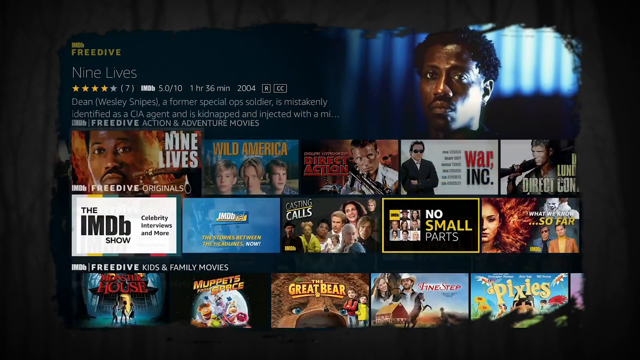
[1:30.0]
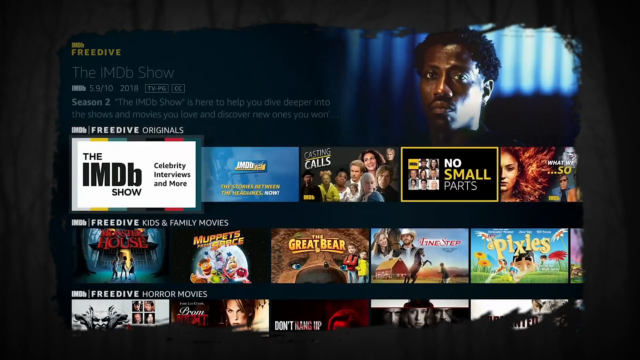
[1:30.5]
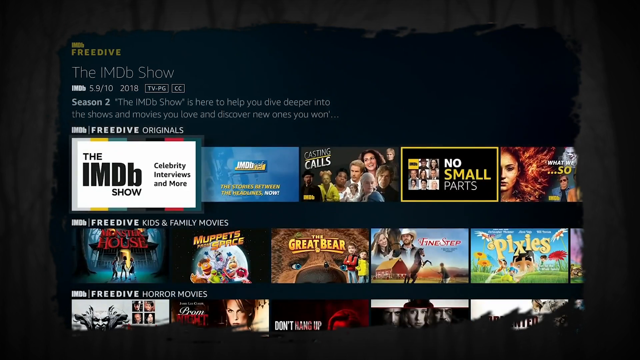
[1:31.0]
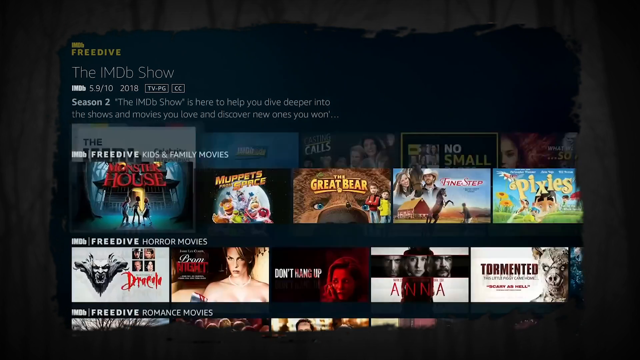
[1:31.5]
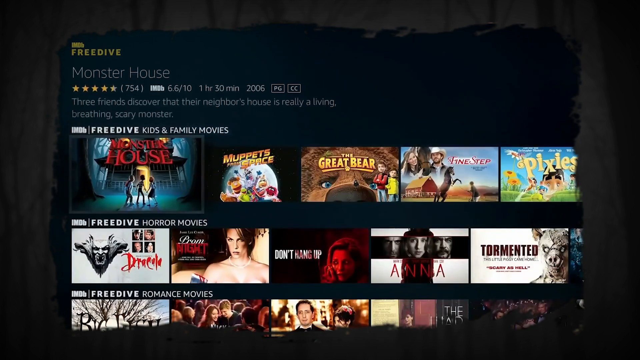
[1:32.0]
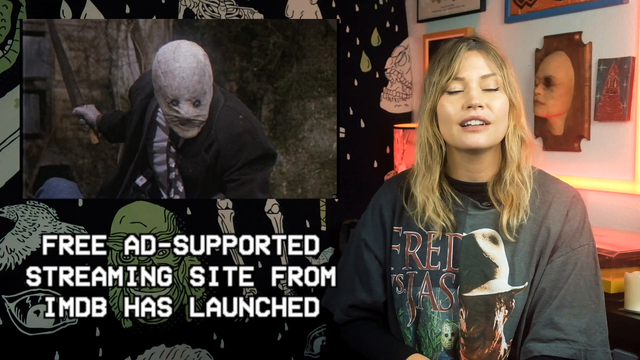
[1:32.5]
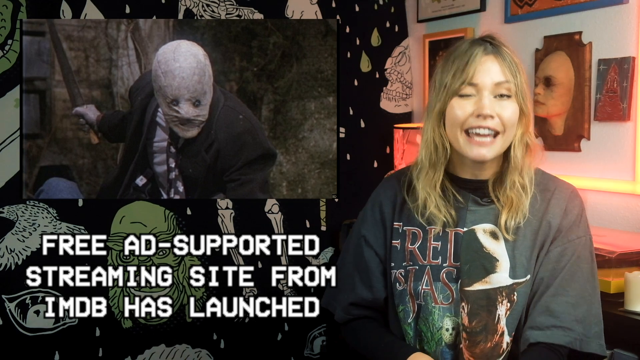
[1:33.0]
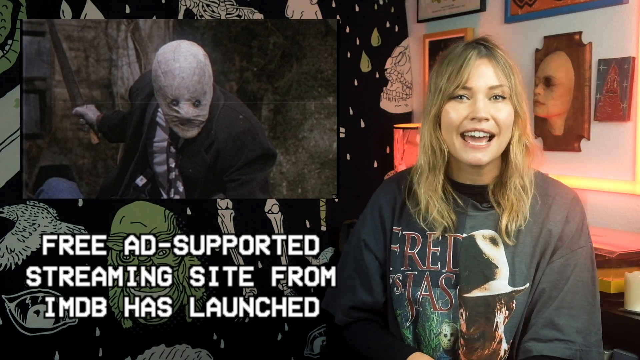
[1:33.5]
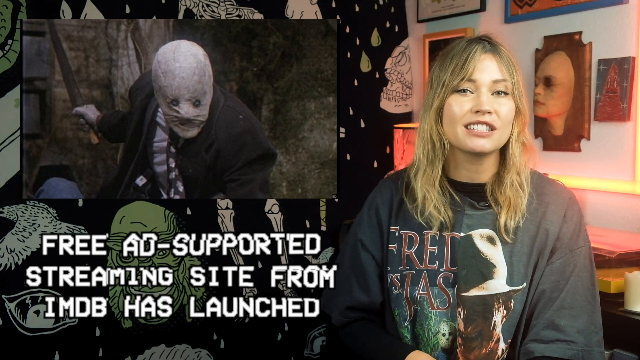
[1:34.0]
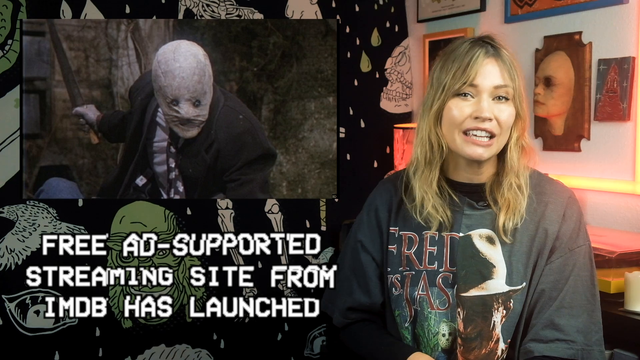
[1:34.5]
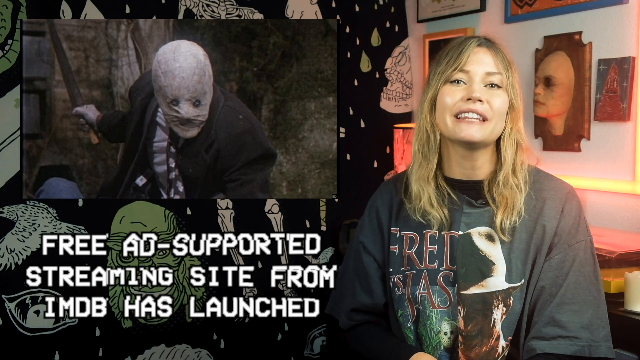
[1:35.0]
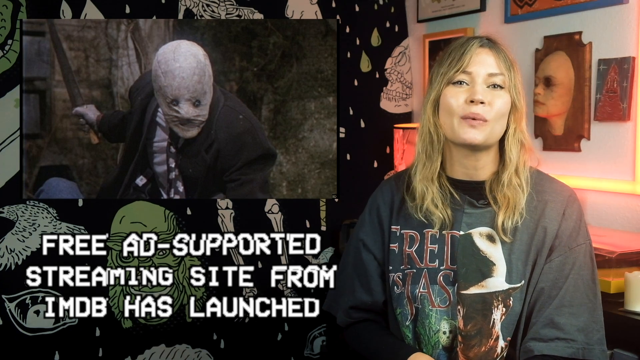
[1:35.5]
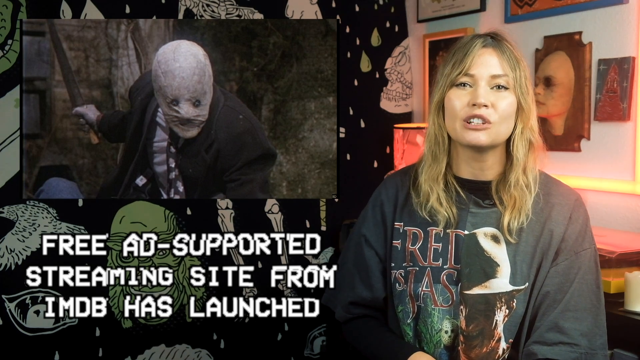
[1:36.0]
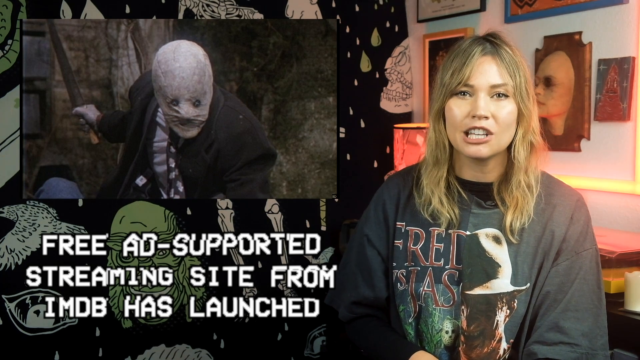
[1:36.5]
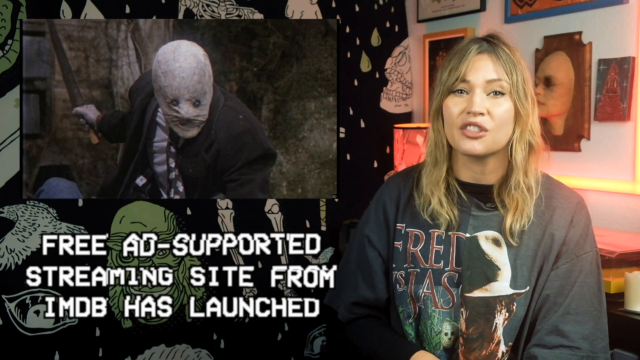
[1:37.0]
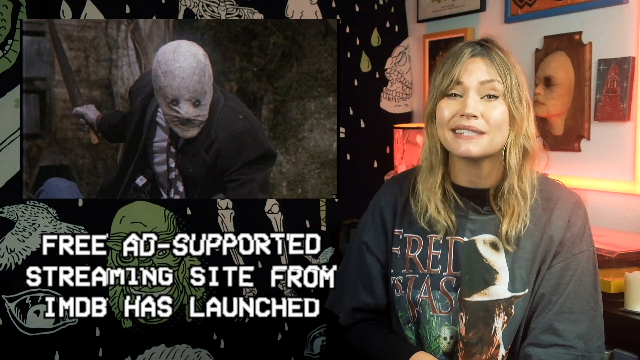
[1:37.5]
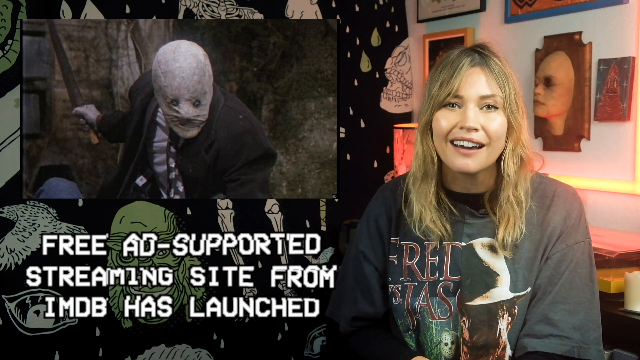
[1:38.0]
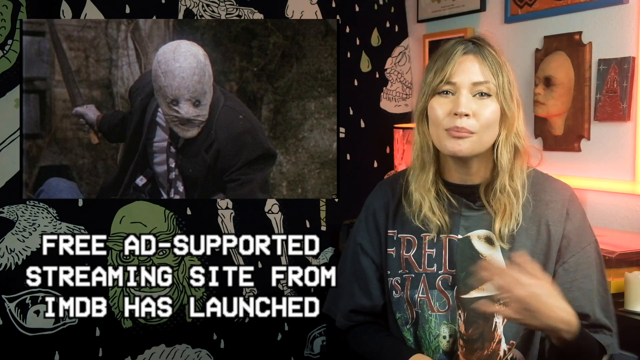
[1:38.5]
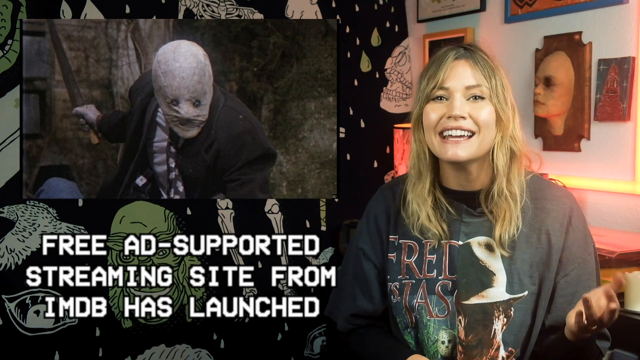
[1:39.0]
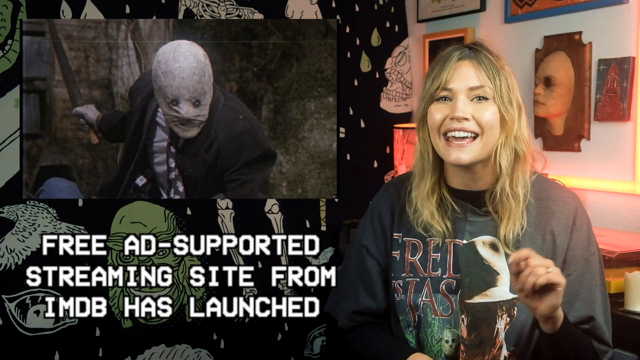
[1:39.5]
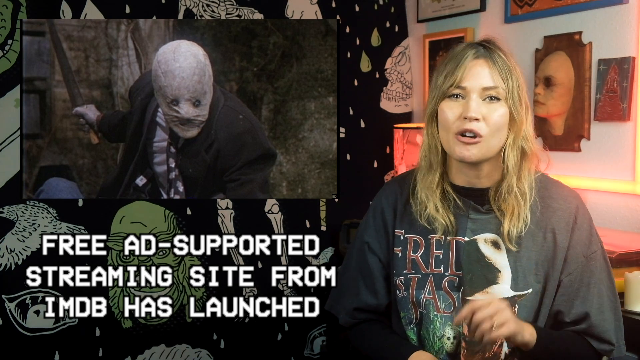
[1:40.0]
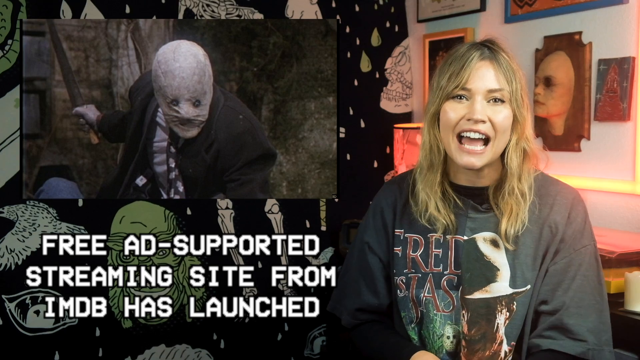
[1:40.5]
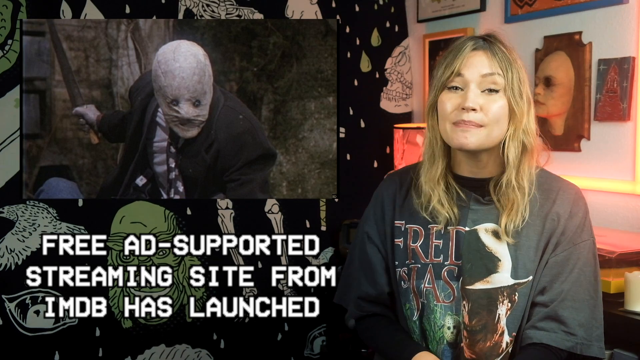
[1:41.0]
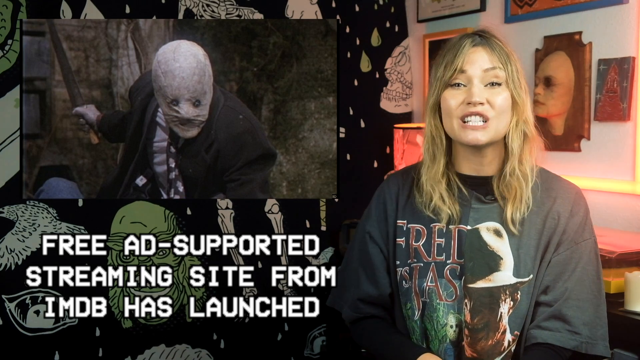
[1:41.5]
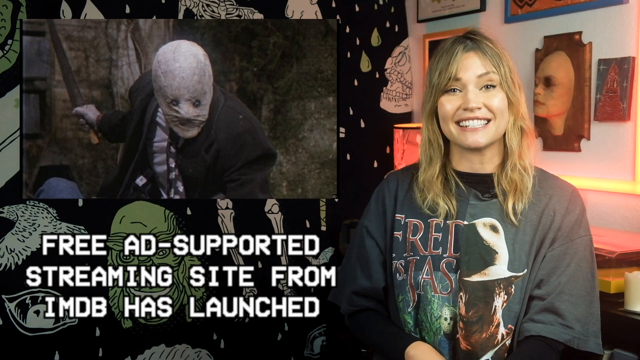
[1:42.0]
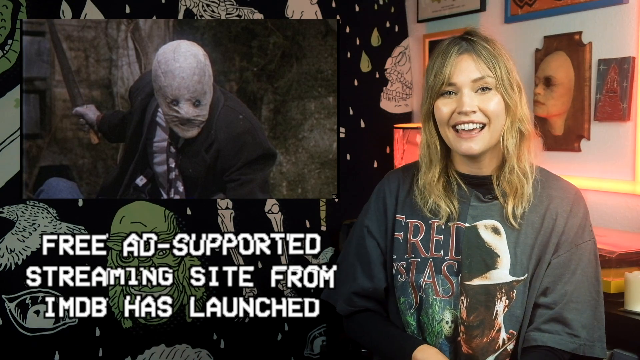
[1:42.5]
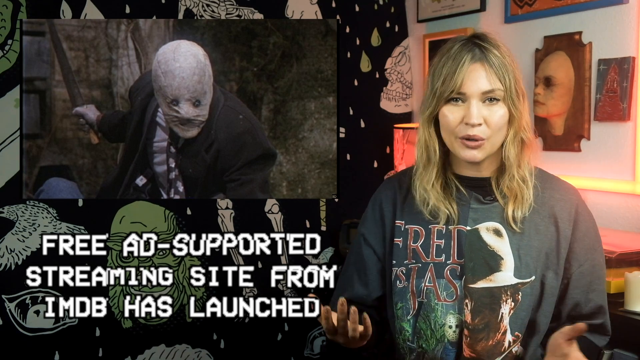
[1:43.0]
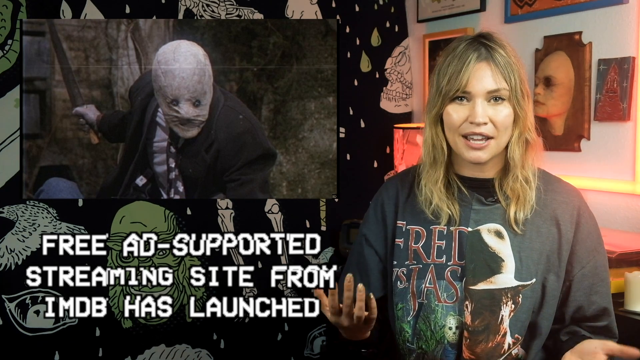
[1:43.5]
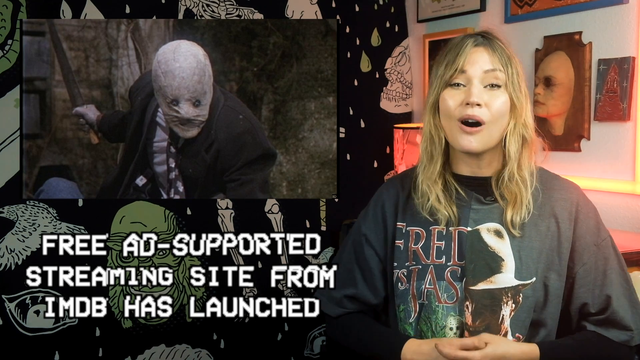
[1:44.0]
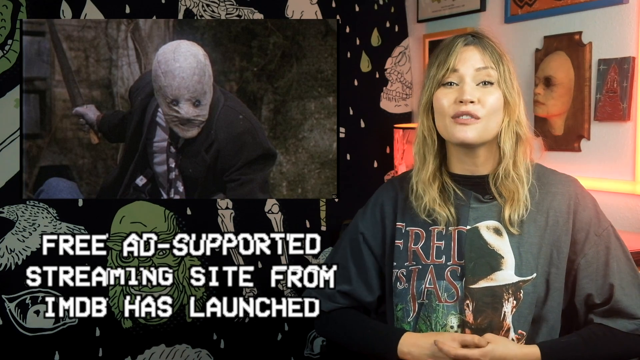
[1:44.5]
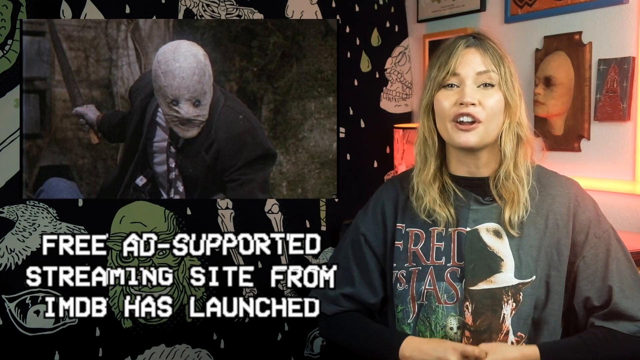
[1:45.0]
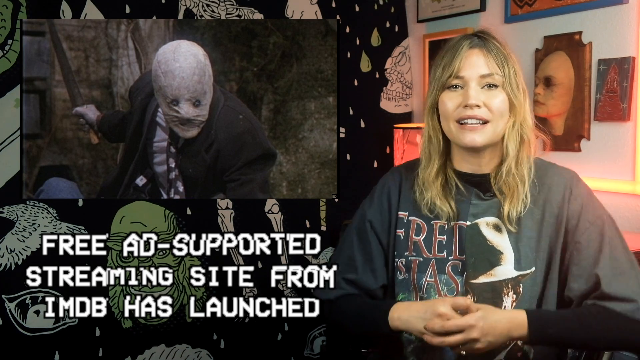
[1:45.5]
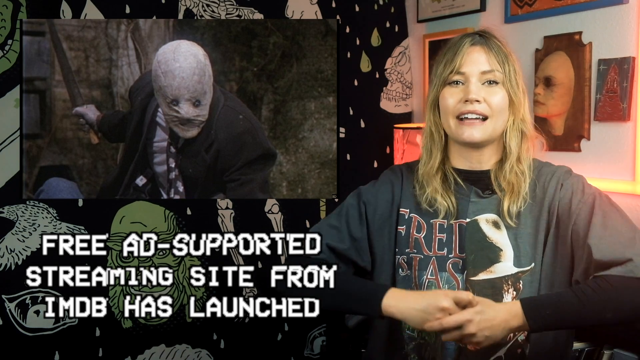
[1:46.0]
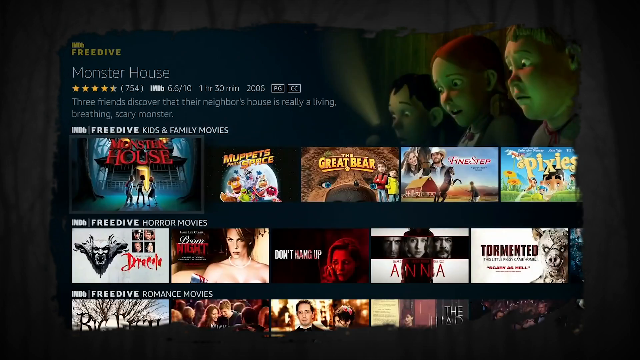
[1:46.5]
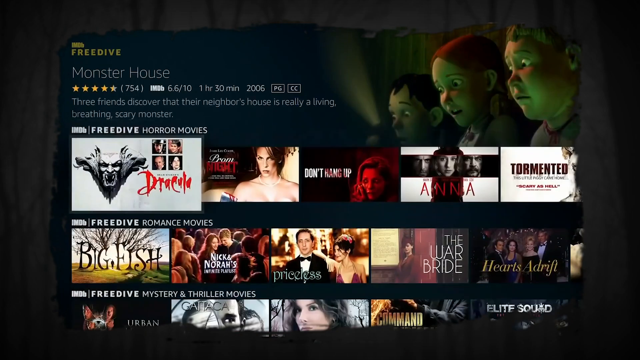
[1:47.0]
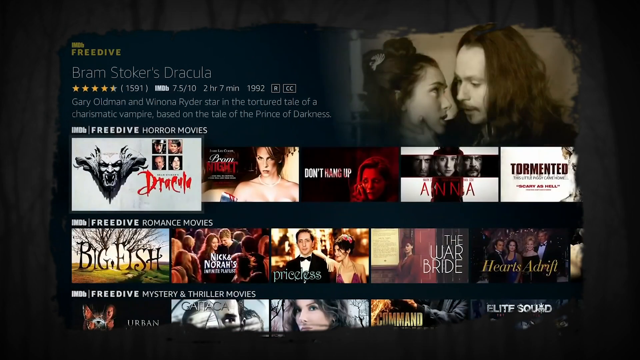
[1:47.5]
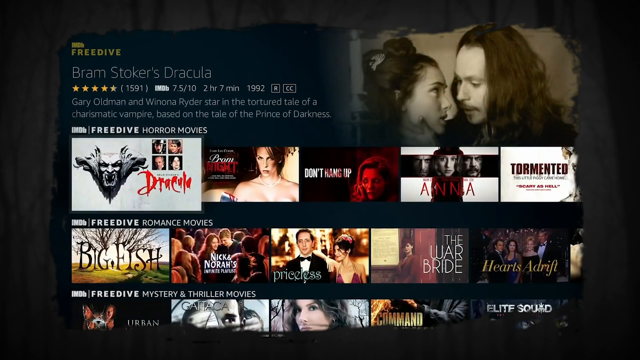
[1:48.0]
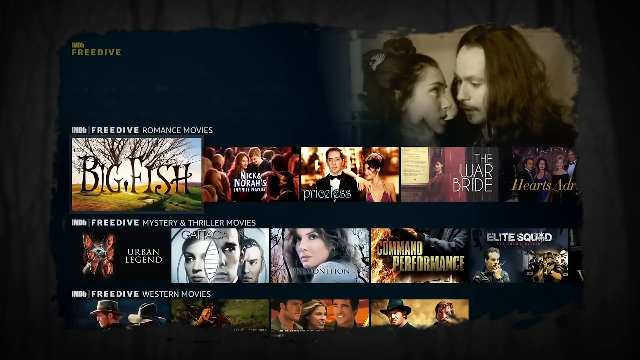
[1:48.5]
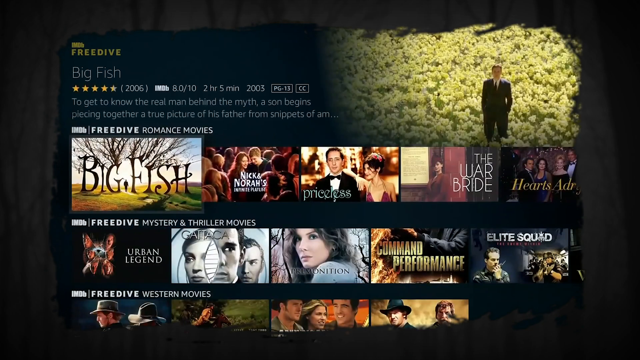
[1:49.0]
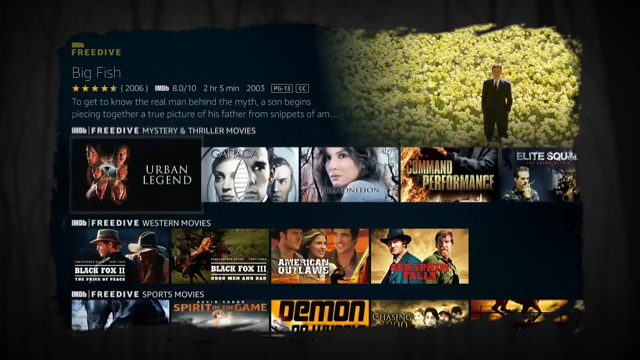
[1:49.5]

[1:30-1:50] The video goes back to the Freedrive website, which shows a continuation of movies, including Monster House and Big Fish among others. The site shows many movies at once rather than just one, and they do not appear to be only horror titles.